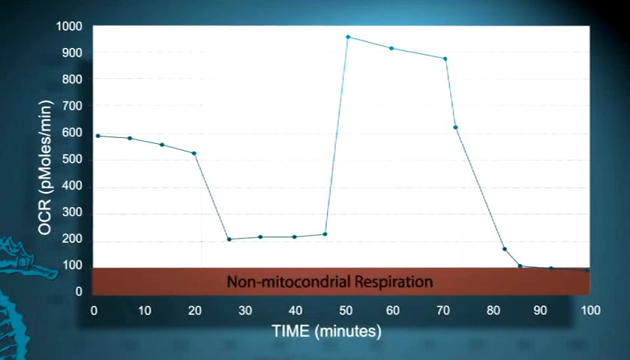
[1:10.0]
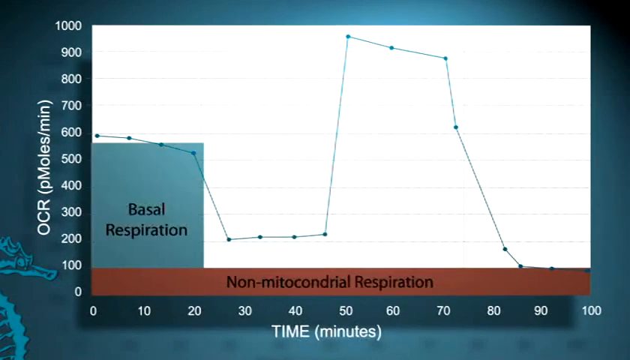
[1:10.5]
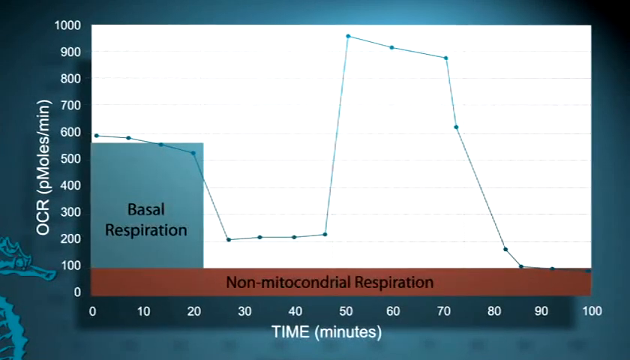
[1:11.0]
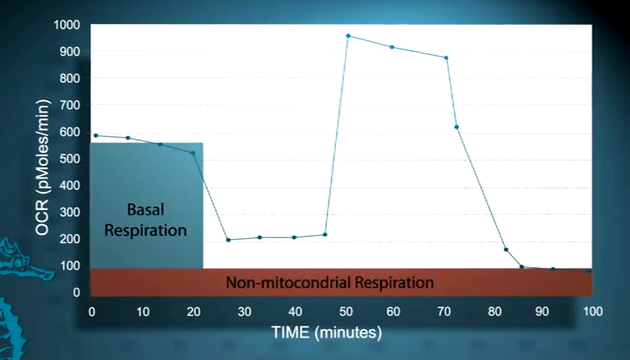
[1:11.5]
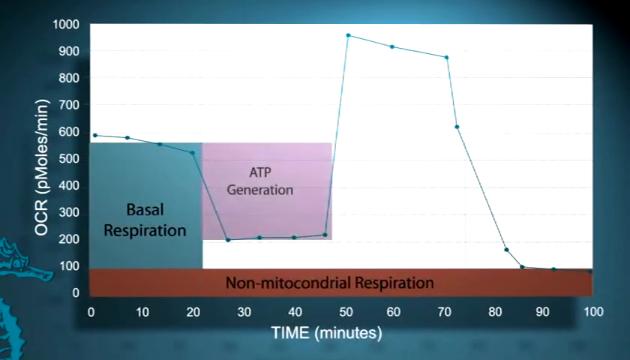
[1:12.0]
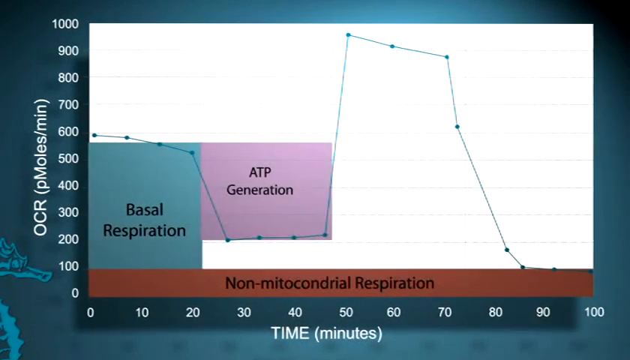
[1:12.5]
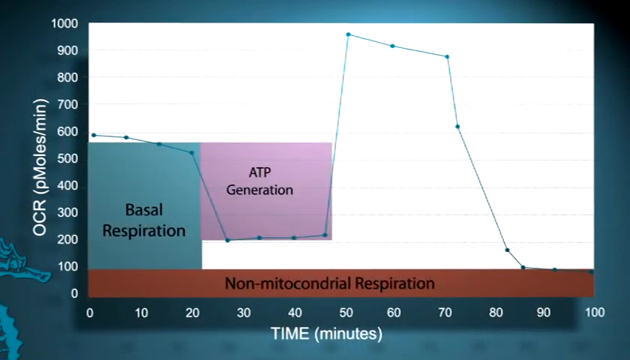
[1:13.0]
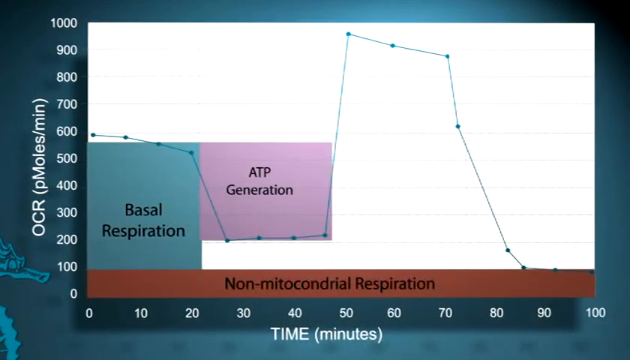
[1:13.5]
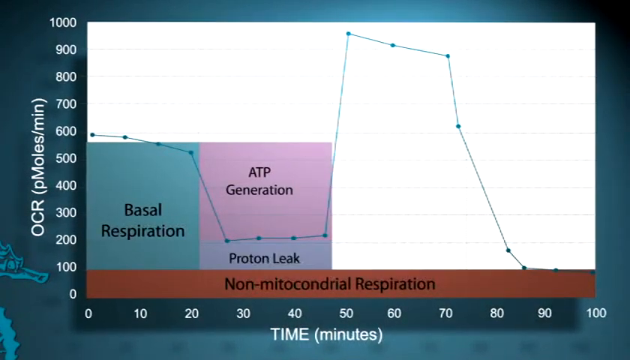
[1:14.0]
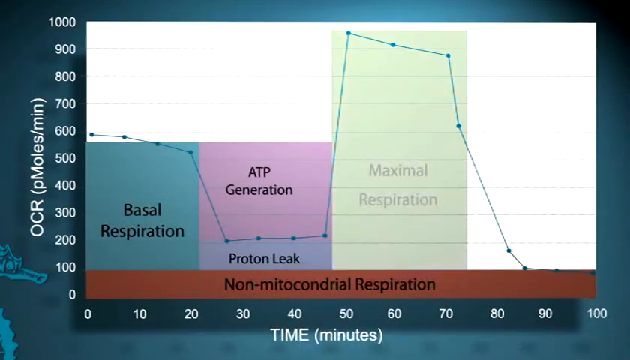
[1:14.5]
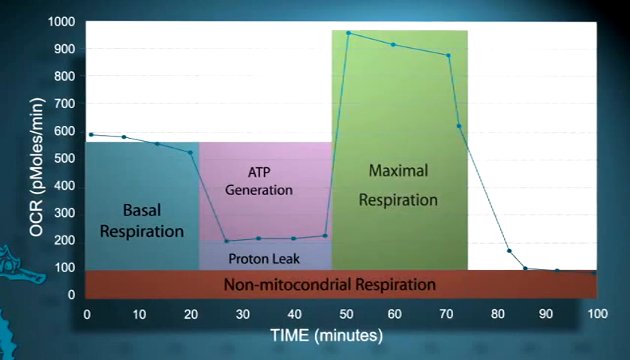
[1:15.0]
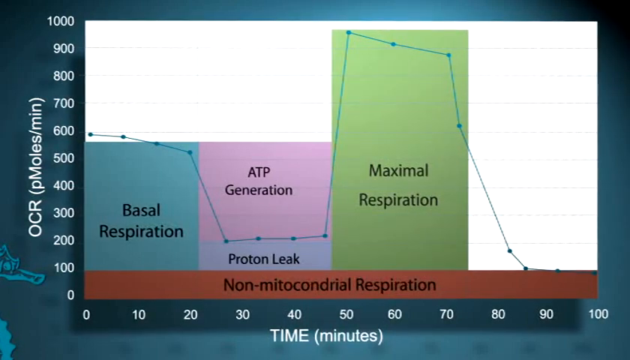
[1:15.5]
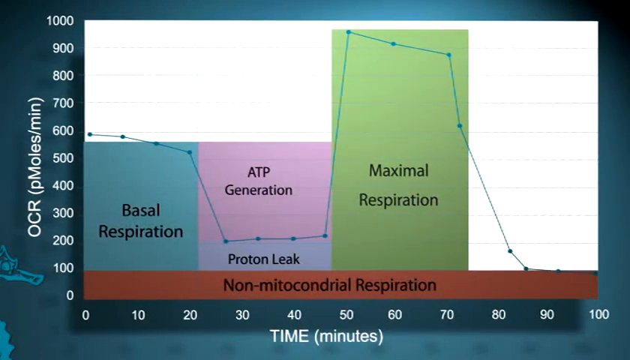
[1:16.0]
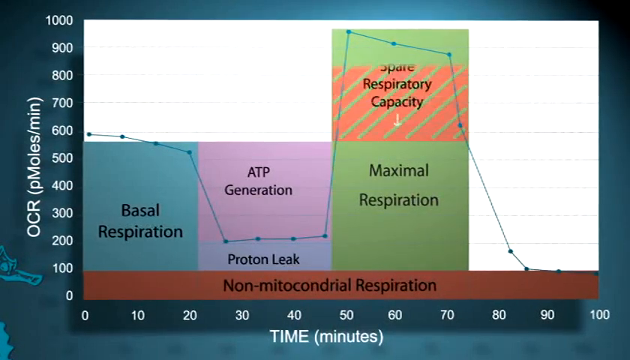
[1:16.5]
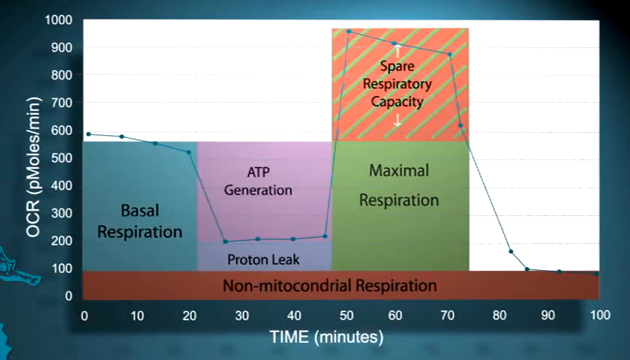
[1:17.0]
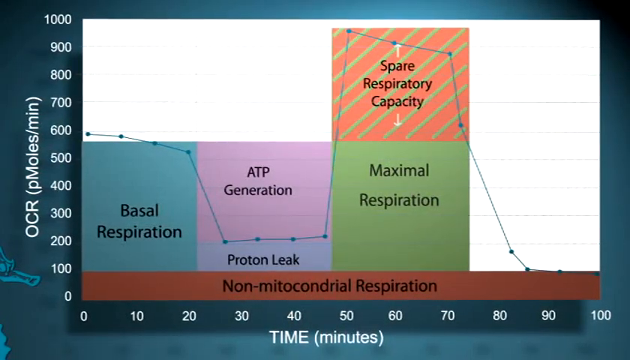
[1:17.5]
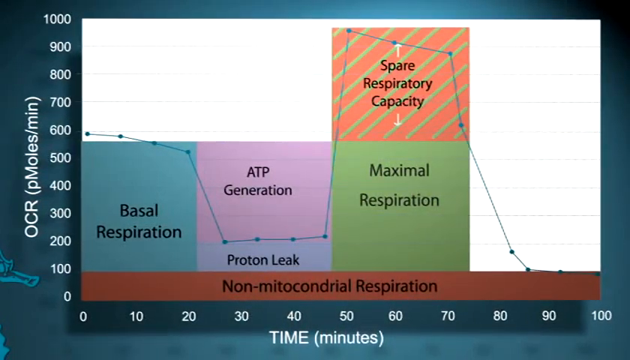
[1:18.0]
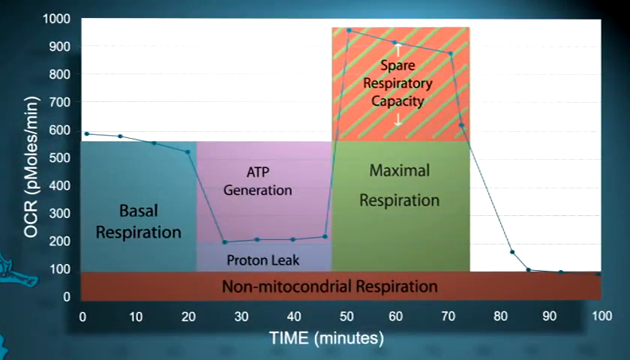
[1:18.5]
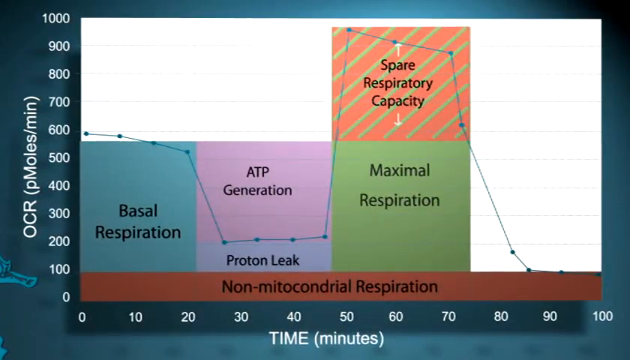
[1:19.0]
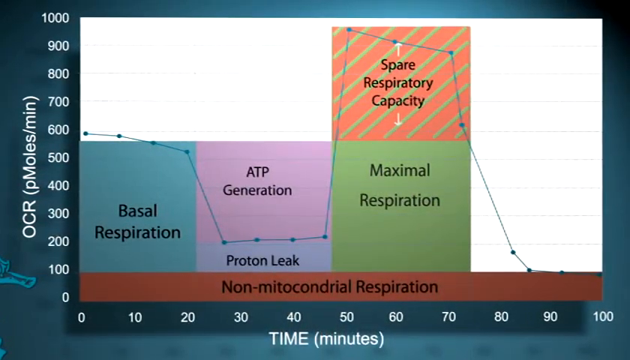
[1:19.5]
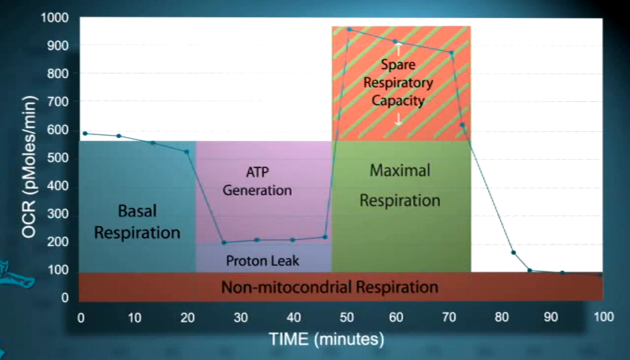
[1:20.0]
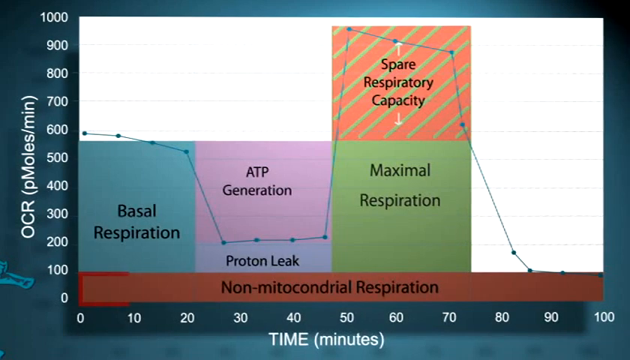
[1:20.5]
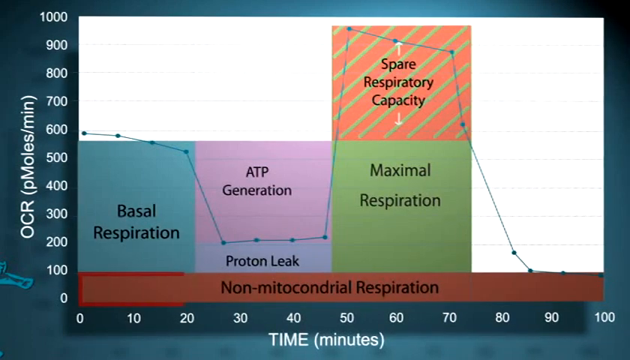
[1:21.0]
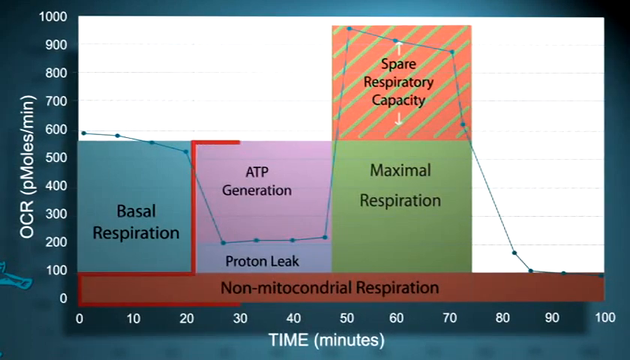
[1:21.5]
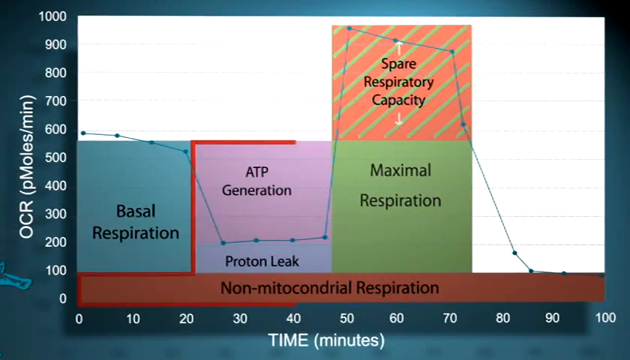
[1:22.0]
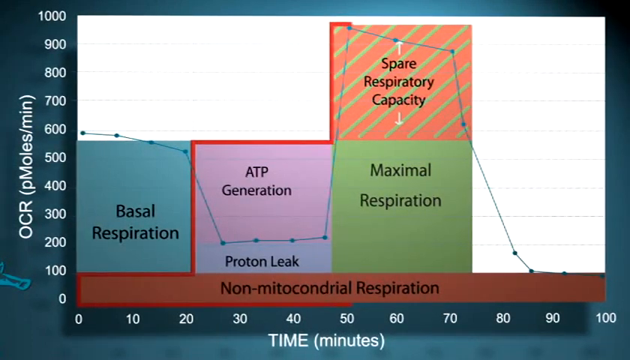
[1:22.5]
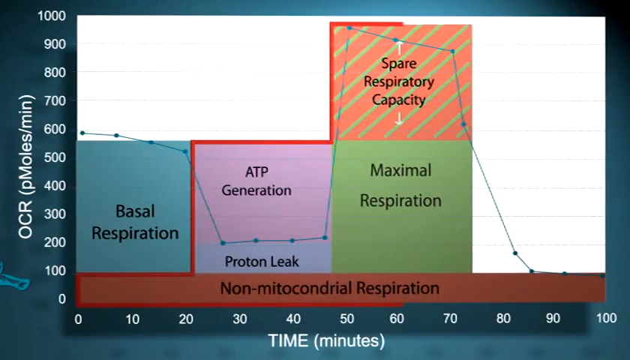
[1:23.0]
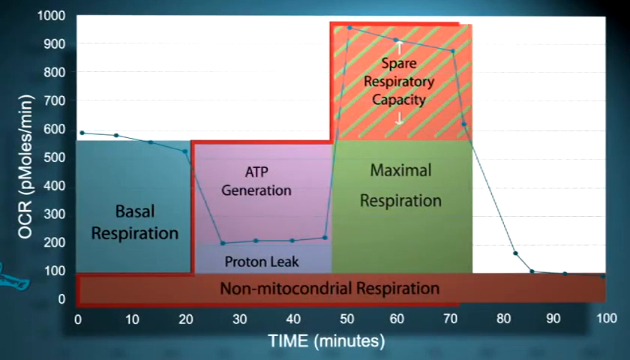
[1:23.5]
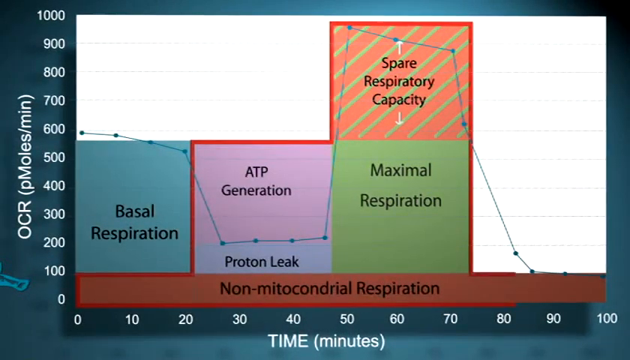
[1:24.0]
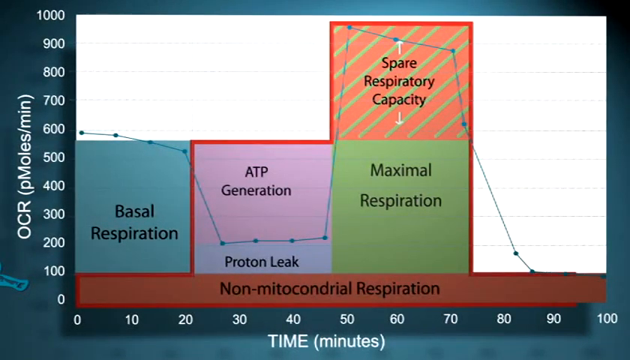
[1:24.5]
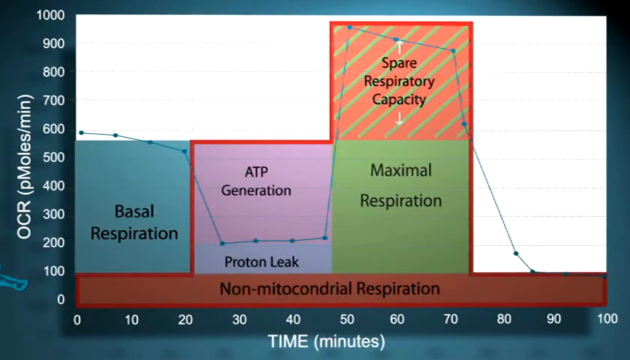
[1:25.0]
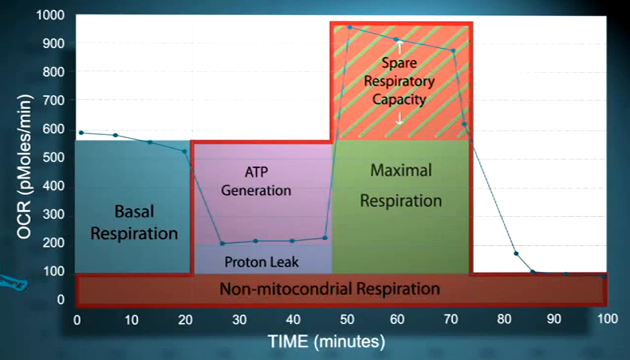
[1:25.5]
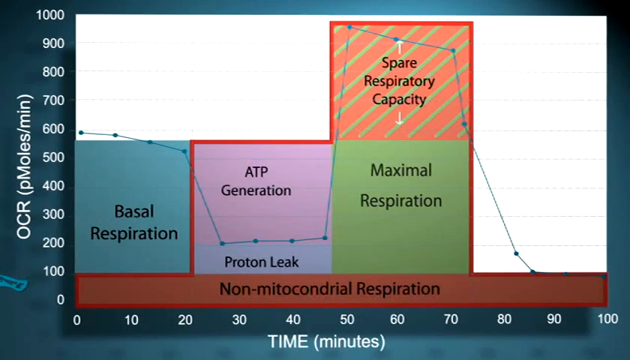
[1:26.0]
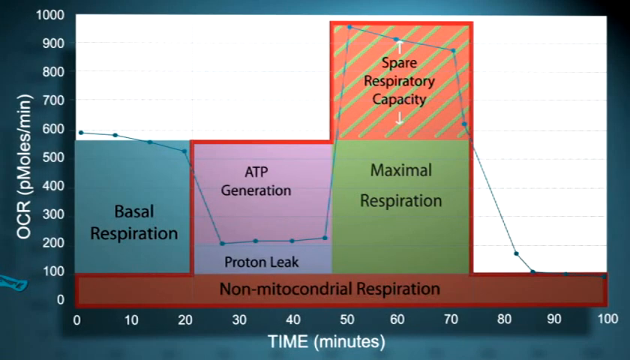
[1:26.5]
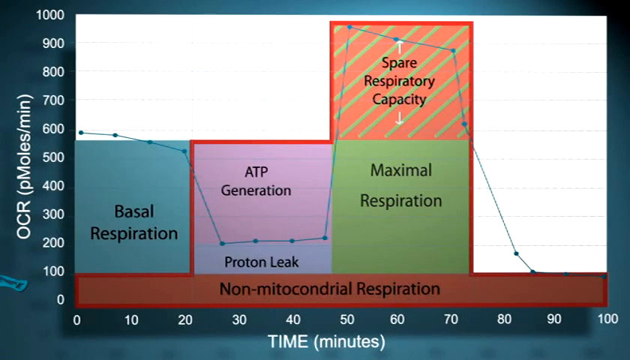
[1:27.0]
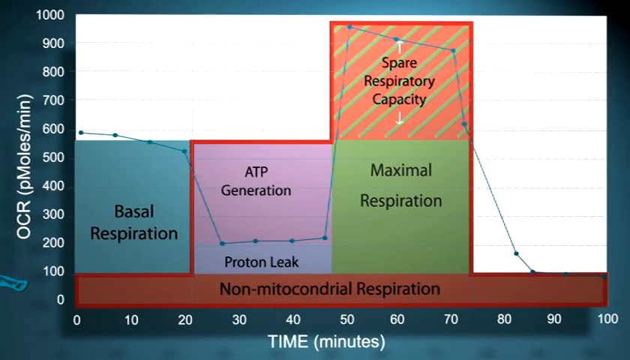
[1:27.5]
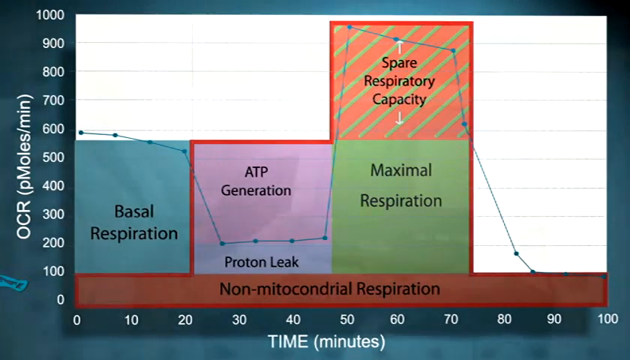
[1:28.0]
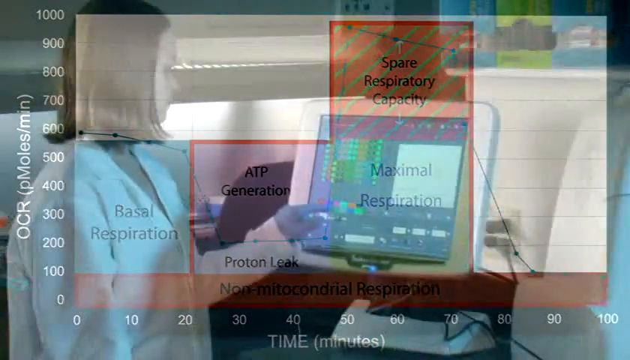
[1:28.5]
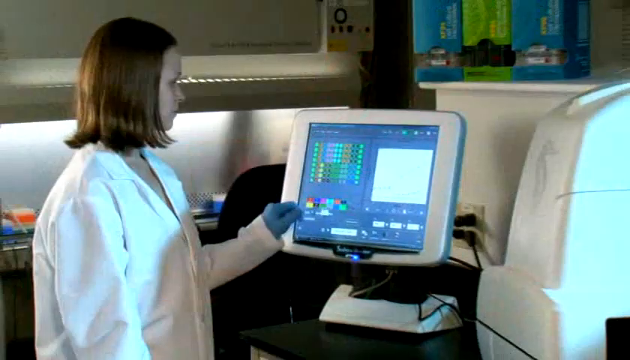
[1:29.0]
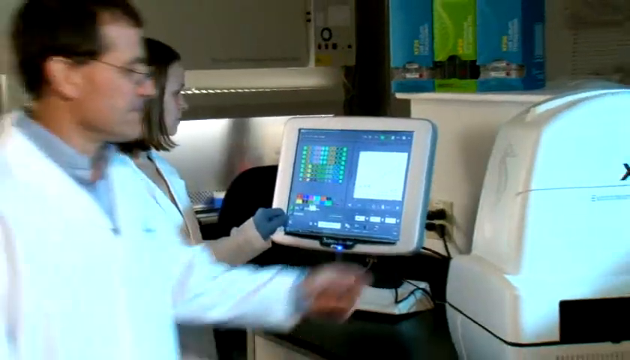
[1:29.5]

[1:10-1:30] A graph has a y-axis on the left reading "OCR, p moles per minute", running from 0 to 1,000, and an x-axis at the bottom reading "time in minutes", running from 0 to 100. A green line graph is drawn from 600 toward the right to about 20 minutes, stays at around 200 OCR from 25 to 45 minutes, jumps to 1,000 OCR at 50 minutes, slowly goes down to 900 by 70 minutes, drops all the way to 100 OCR at 85 minutes, and stabilizes at 100. What looks like a brown horizontal bar at the bottom of the graph has black text reading "non-mitochondrial respiration". Highlights appear on the line graph: what looks like a green box around the 500 OCR to 20 minute area, with a little green rectangle inside reading "basal respiration"; a purple square drawn from 550 OCR, from 25 to 45 minutes, with its bottom at 200 OCR, reading "ATP generation", with "proton leak" below it; and to the right, around 1,000 from 50 to 75 minutes, a very large green rectangle reading "maximal respiration". From 550 OCR upward in that area a red stripe appears, reading "spare respiratory capacity", with white arrows at the top and bottom. A red border then appears from left to right, highlighting the ATP generation, proton leak, non-mitochondrial respiration, spare respiratory capacity and maximal respiration squares, and a red outline surrounds all of them, so only basal respiration is not outlined. The video then transitions to what looks like two scientists. A woman with short blonde hair is on the left, looking to the right, with her left hand touching a monitor on the right side. A man walks in from left to right and puts his left hand on top of the XF96 machine.